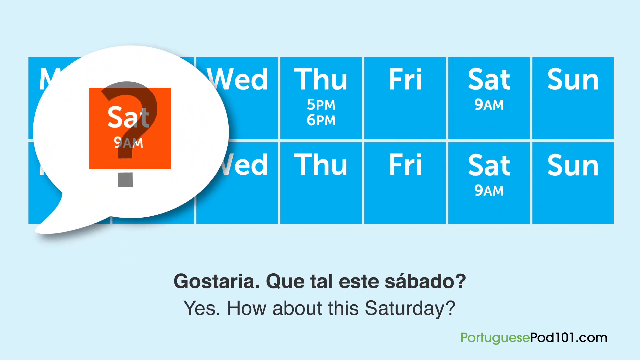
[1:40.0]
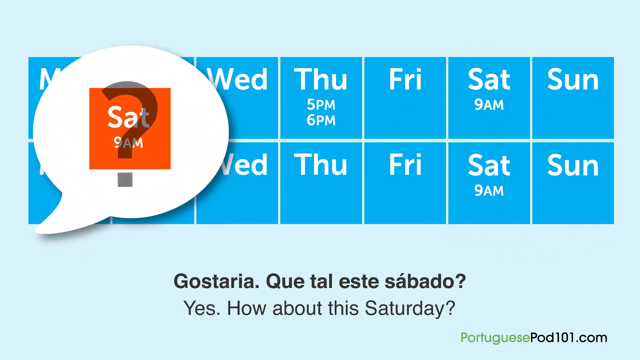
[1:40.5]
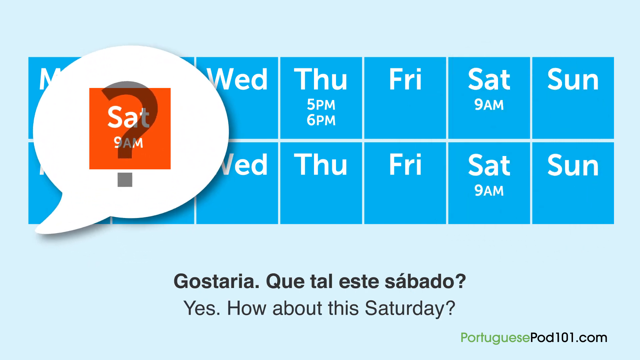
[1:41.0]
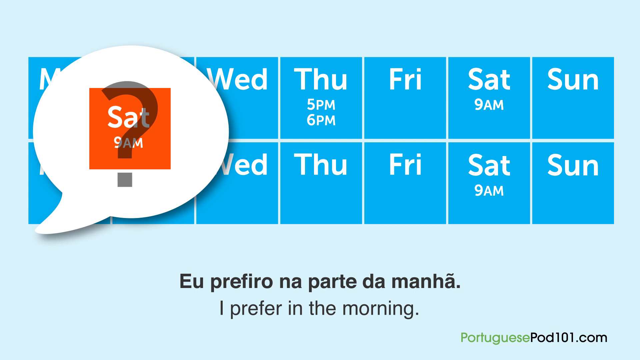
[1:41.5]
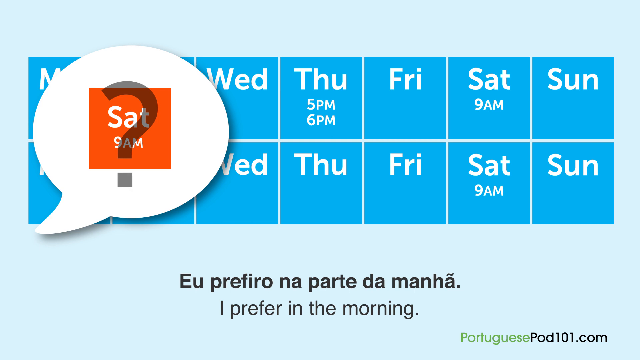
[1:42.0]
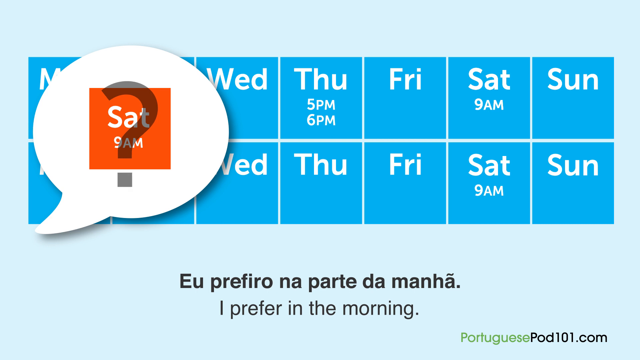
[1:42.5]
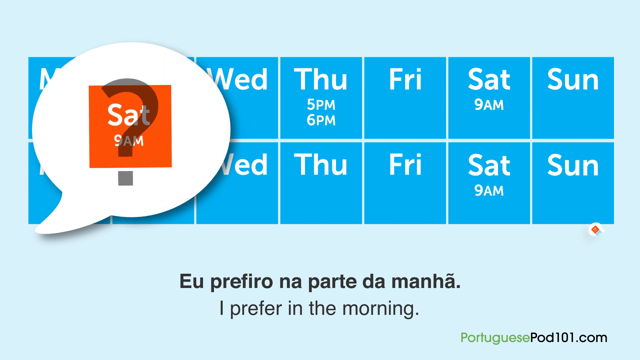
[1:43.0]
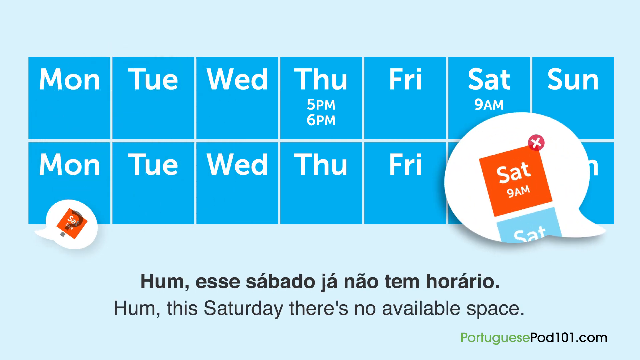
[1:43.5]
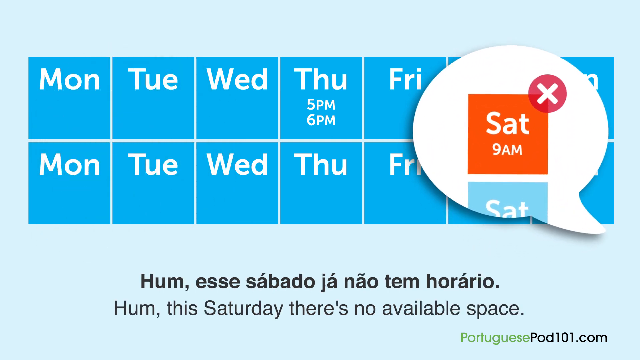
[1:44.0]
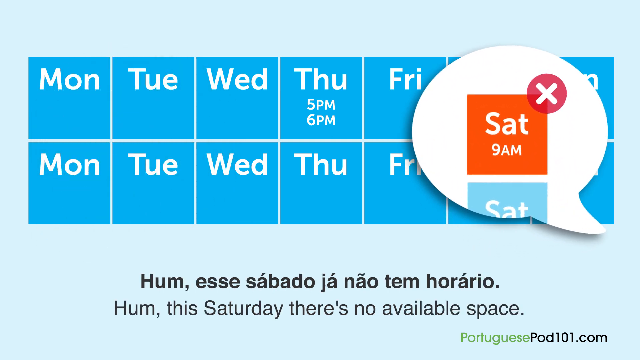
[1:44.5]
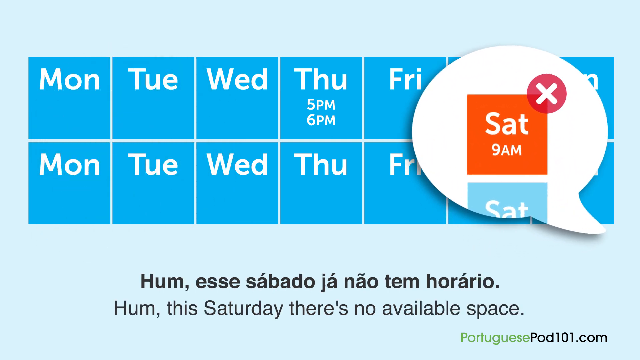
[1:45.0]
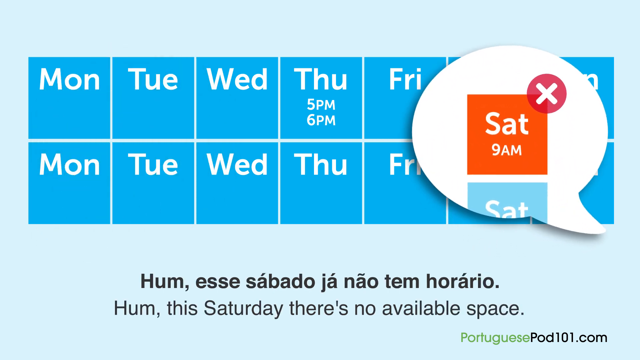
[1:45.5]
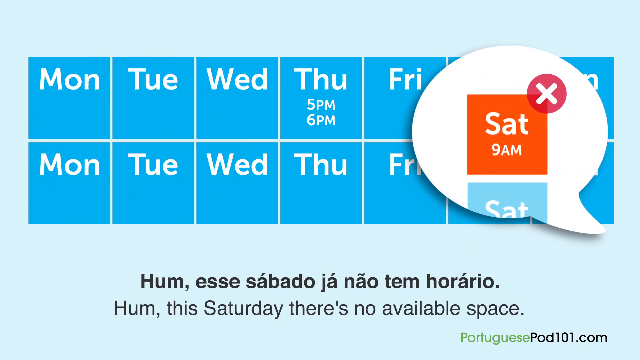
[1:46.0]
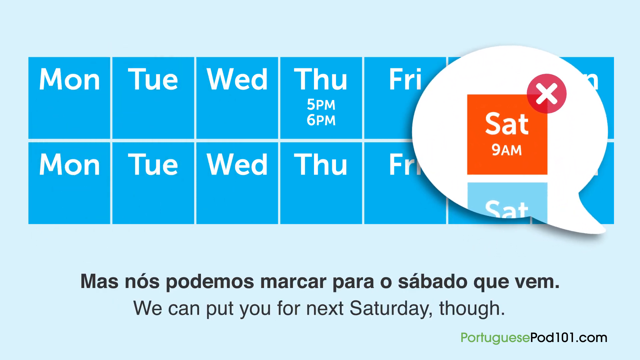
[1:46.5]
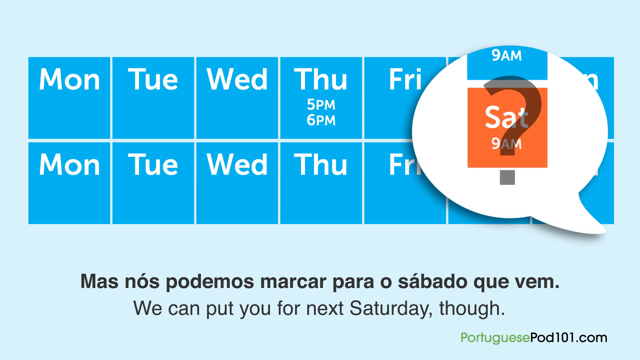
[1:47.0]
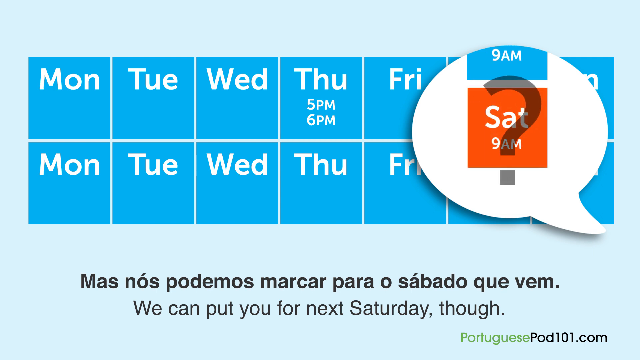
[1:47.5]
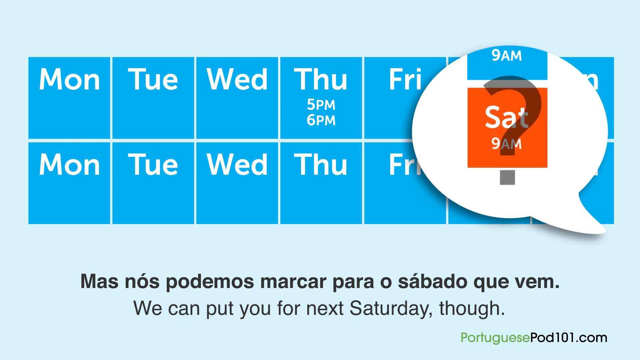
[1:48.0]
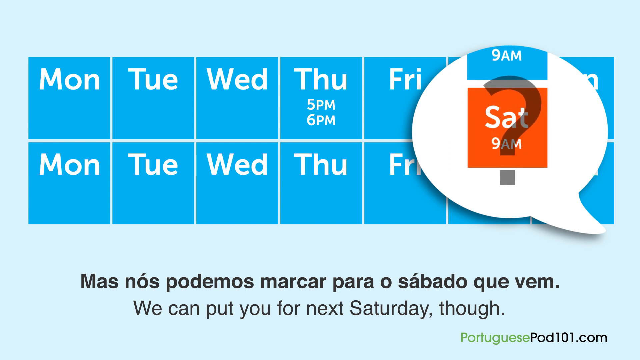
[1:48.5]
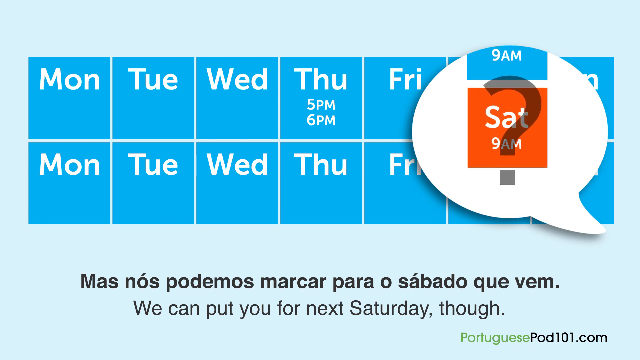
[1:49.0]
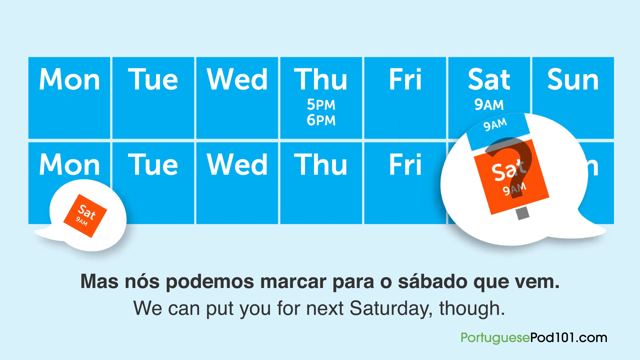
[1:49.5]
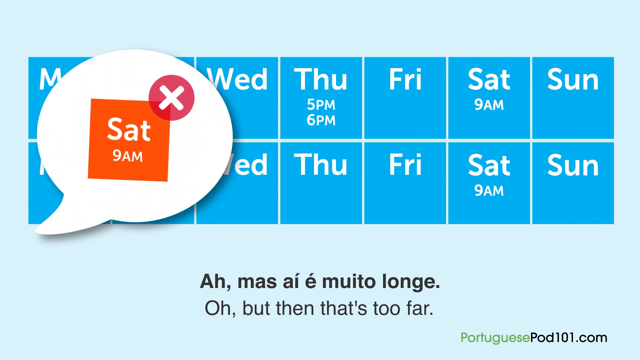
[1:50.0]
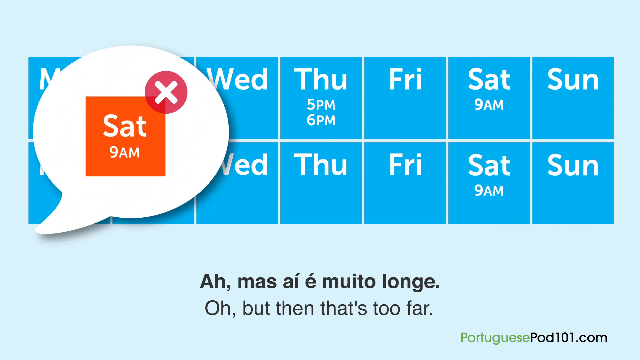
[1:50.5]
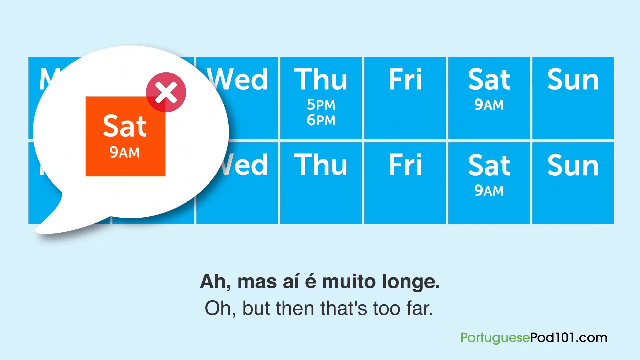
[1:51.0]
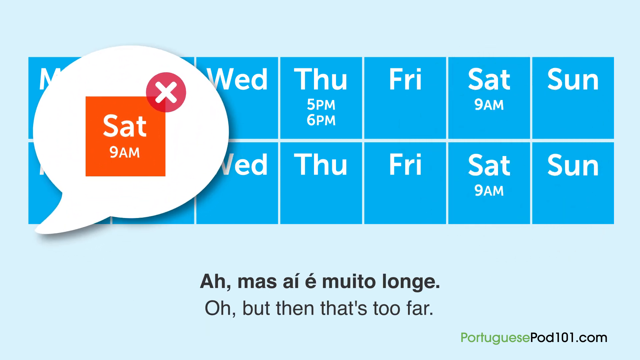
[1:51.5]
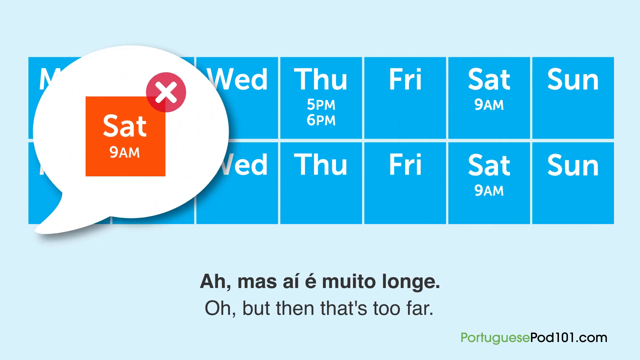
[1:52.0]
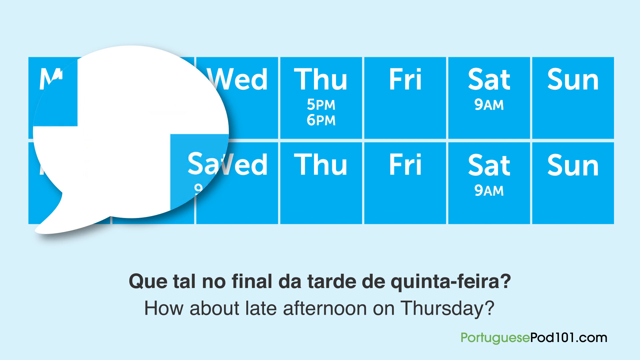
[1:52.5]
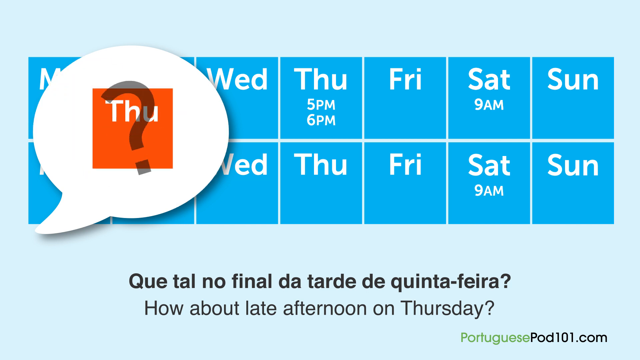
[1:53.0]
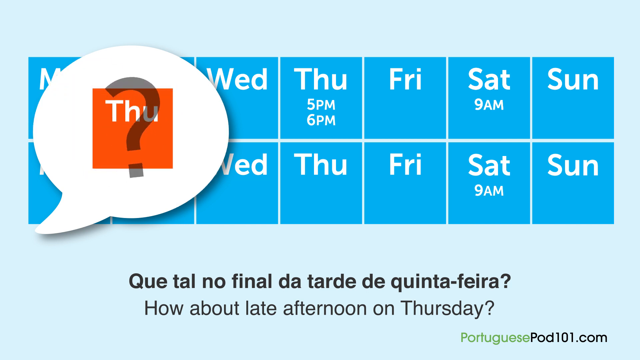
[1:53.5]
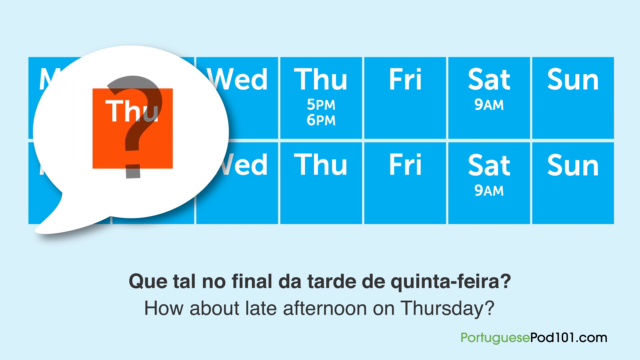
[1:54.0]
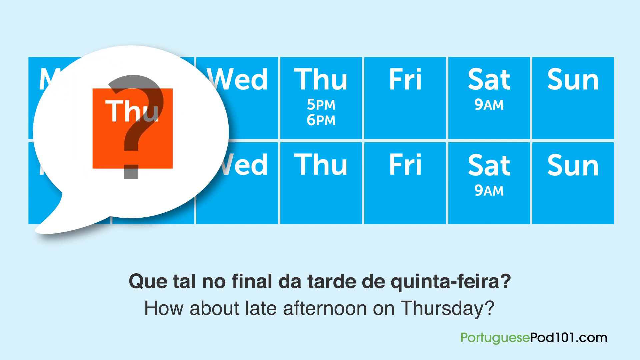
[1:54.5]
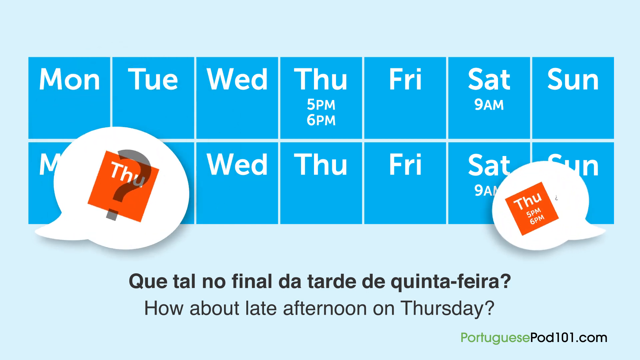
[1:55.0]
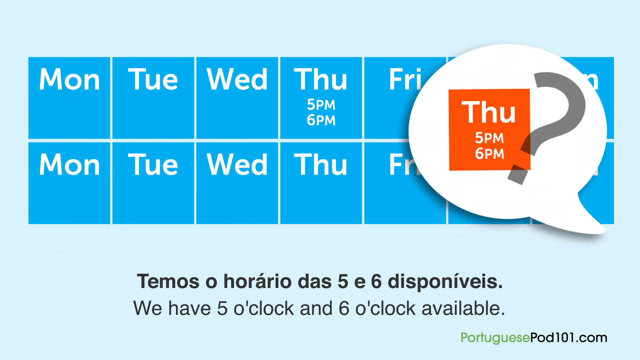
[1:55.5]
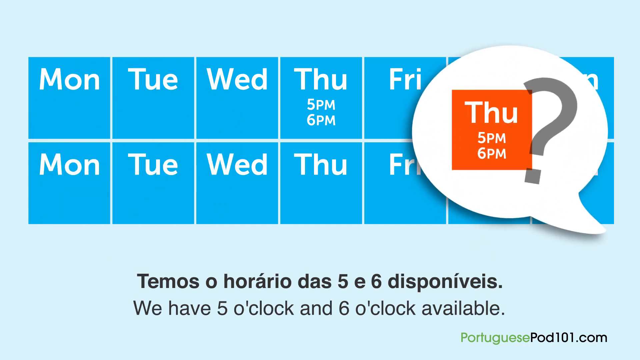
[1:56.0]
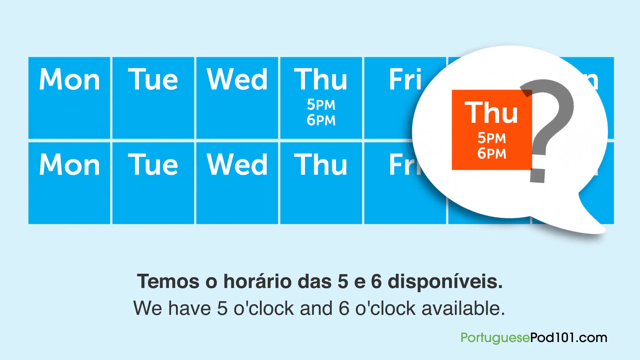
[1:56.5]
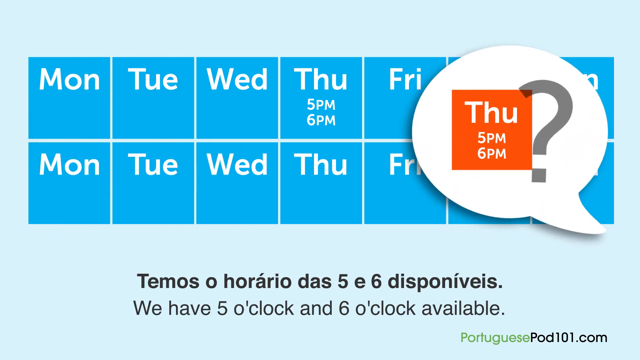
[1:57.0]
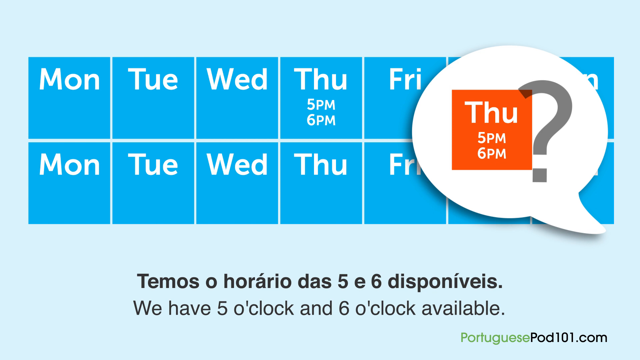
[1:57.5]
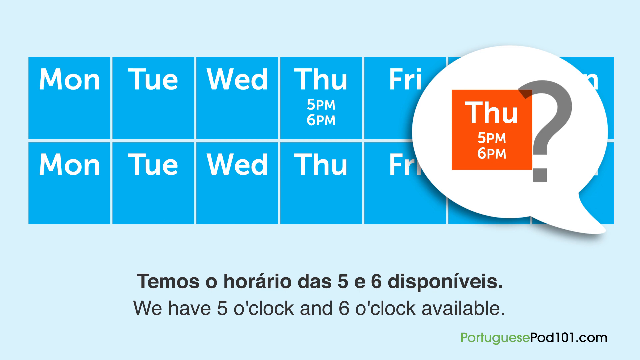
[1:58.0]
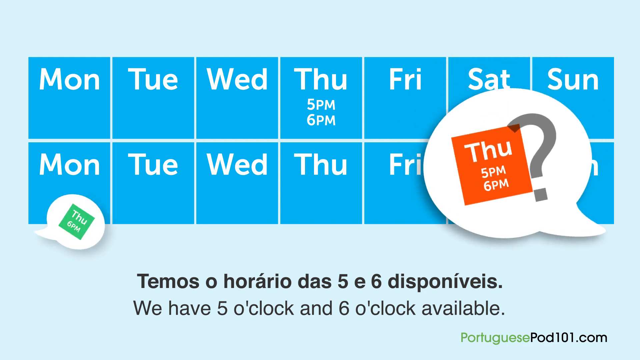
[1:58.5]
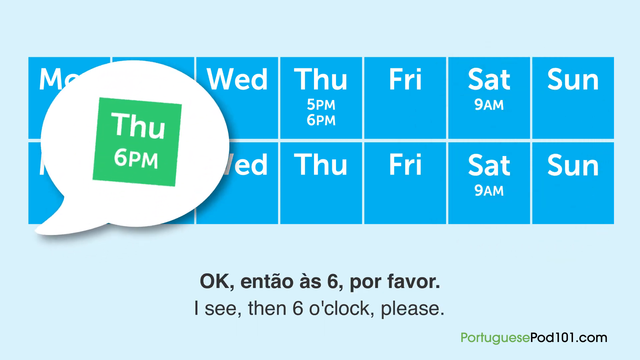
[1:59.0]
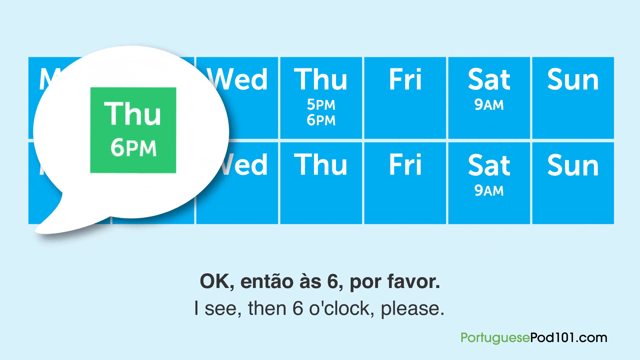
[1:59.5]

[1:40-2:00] A speech bubble shows a date box highlighted in orange, apparently for someone who wants an appointment on Saturday at 9 a.m. but prefers a different time. Next, this Saturday is marked with an X, indicating the appointment cannot be booked for this Saturday but can be for next Saturday. A question mark is shown over that symbol, representing days that are available but that the client may not want. A date on the calendar in the speech bubble appearing in green indicates a date that is both available and one the person can come in.